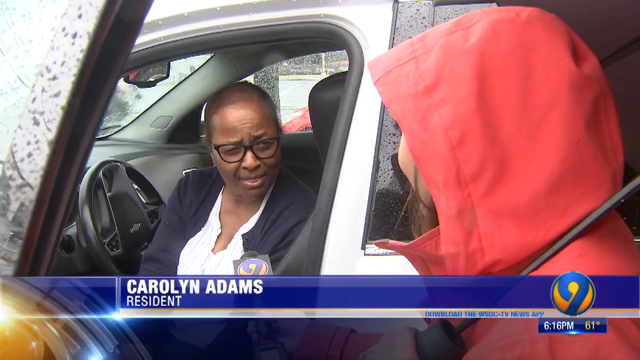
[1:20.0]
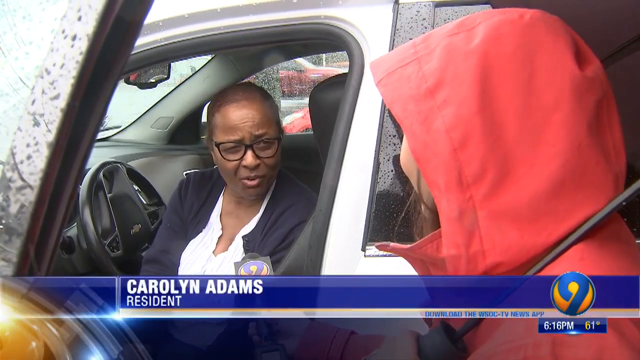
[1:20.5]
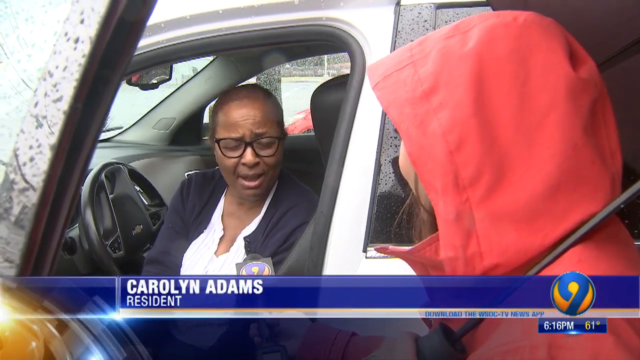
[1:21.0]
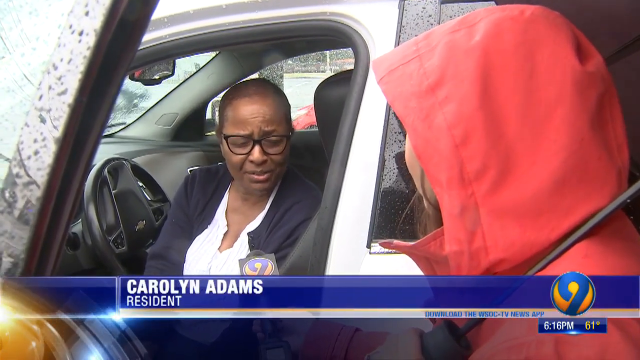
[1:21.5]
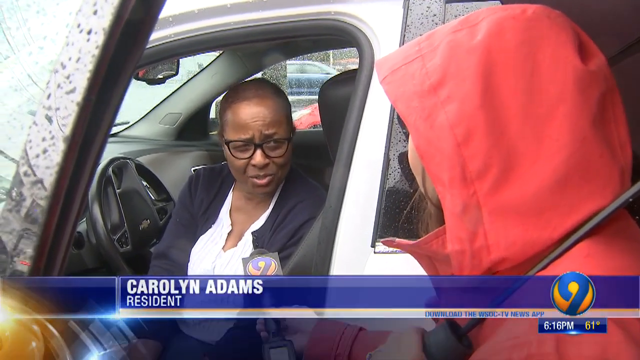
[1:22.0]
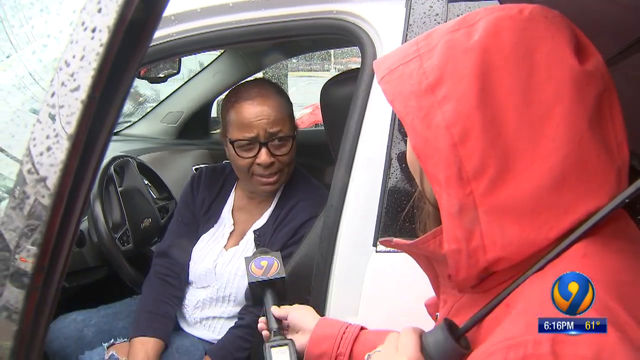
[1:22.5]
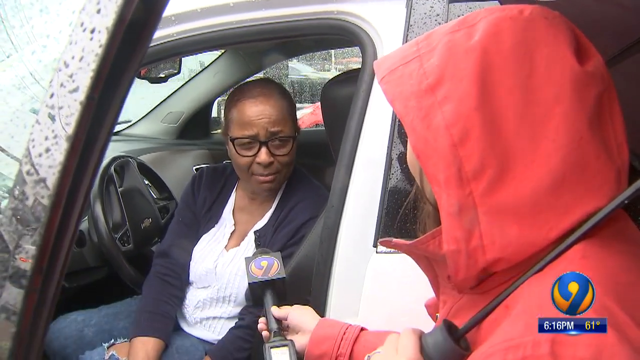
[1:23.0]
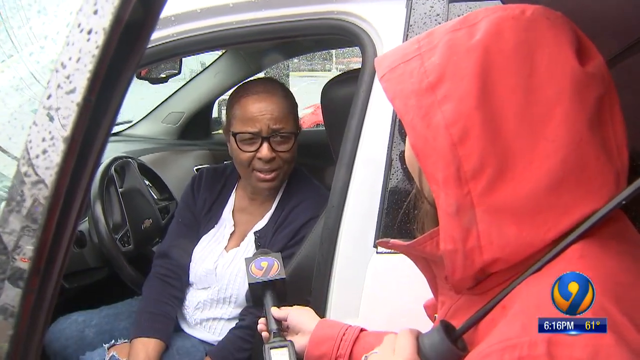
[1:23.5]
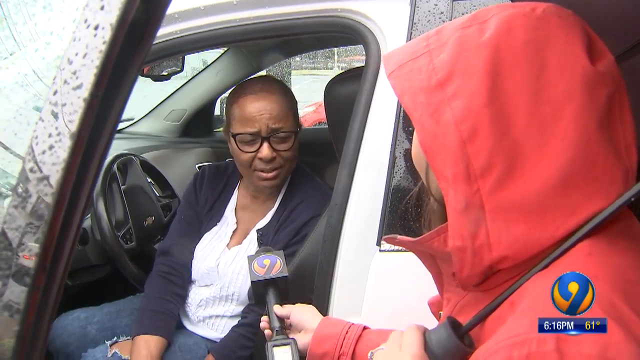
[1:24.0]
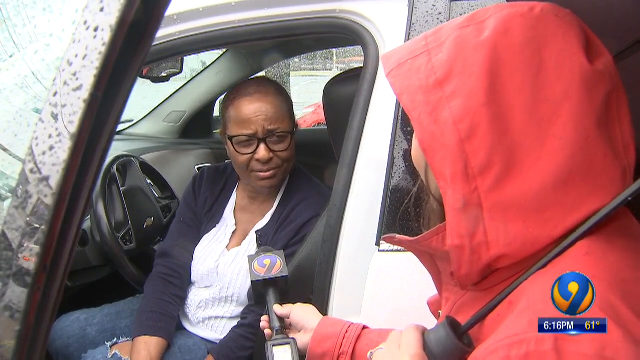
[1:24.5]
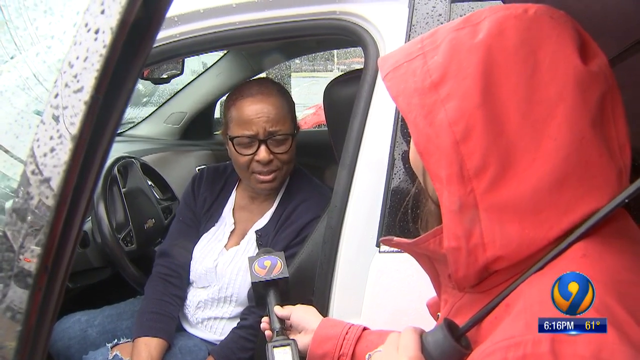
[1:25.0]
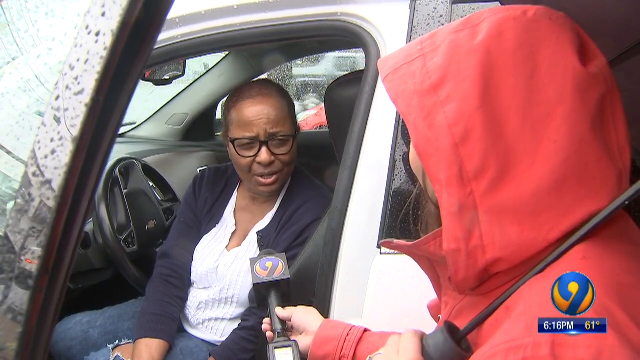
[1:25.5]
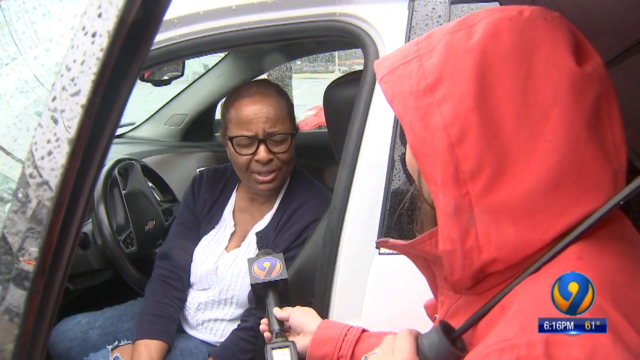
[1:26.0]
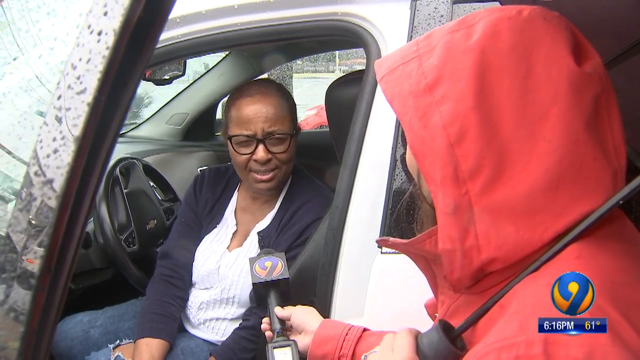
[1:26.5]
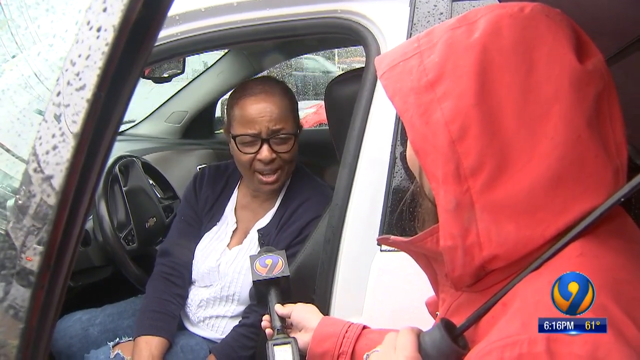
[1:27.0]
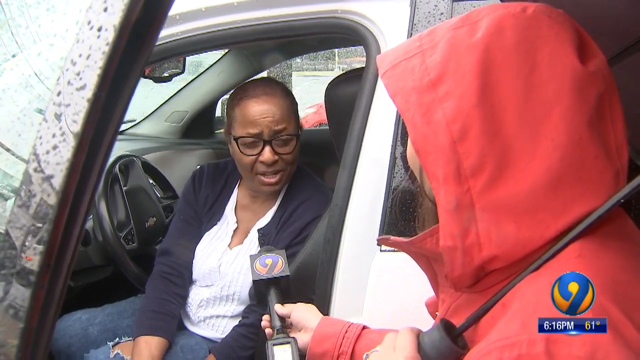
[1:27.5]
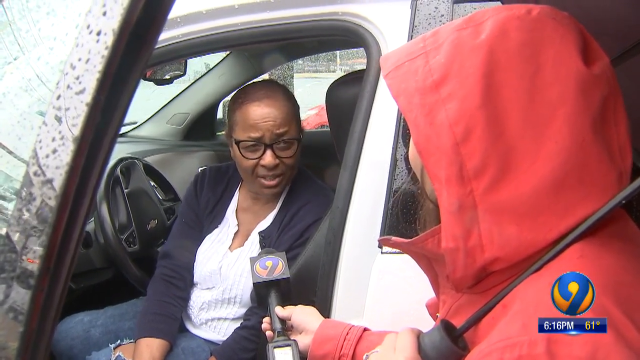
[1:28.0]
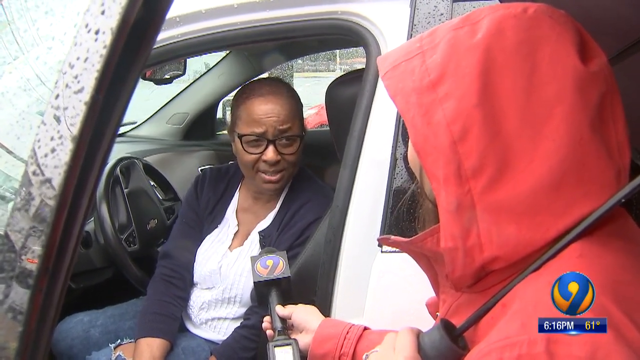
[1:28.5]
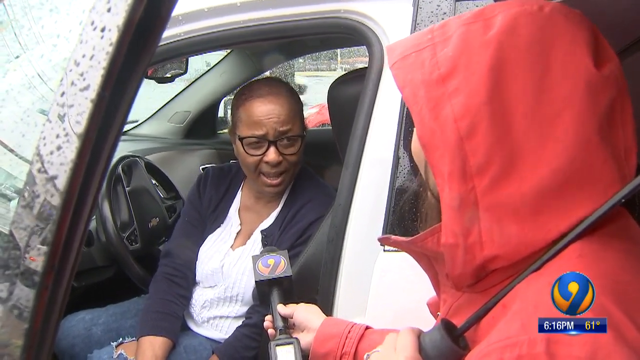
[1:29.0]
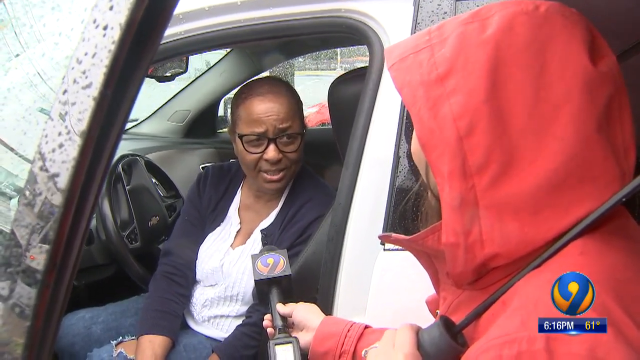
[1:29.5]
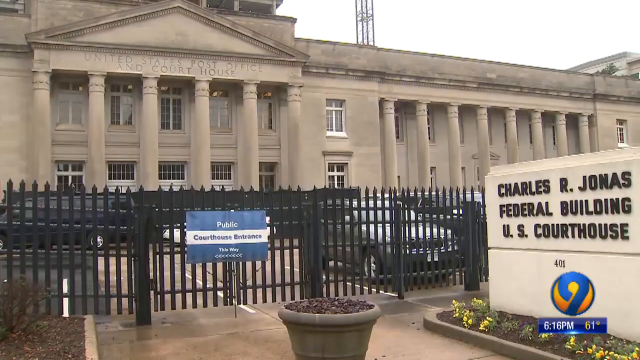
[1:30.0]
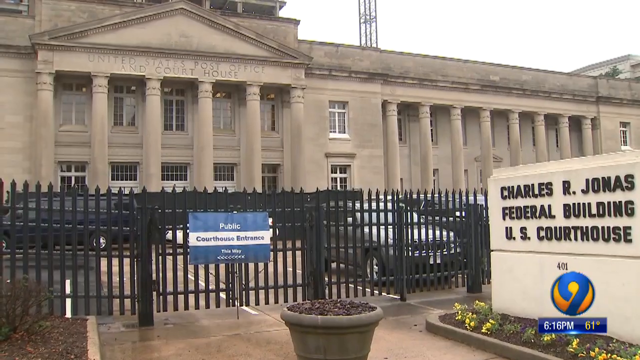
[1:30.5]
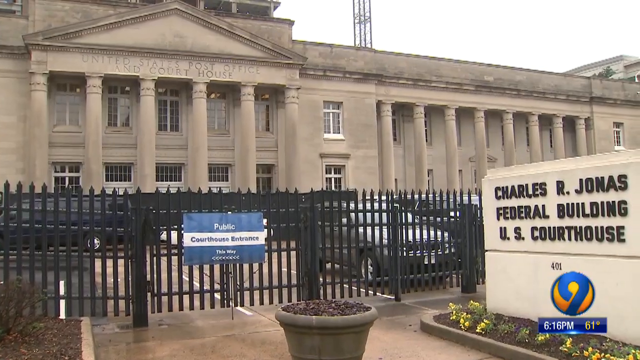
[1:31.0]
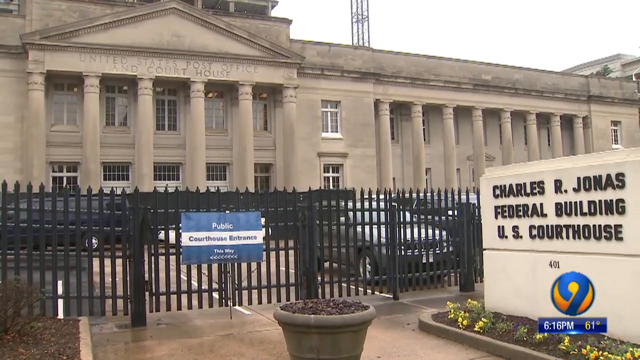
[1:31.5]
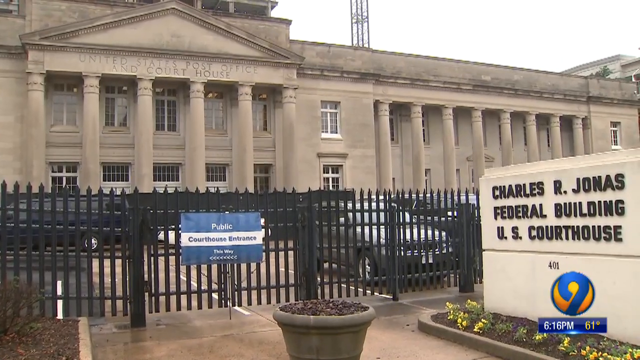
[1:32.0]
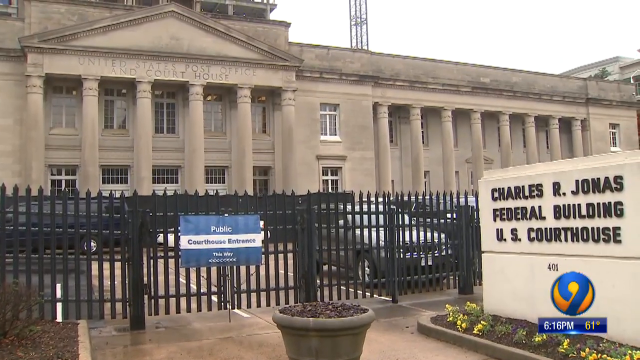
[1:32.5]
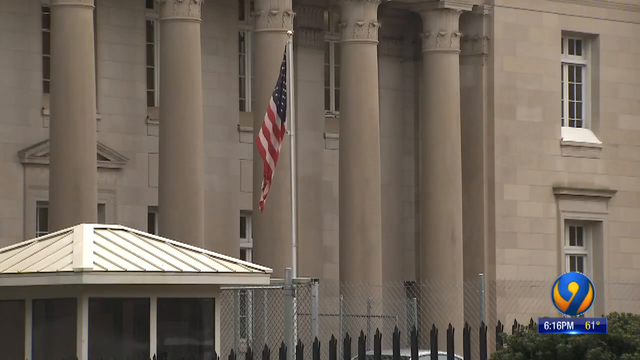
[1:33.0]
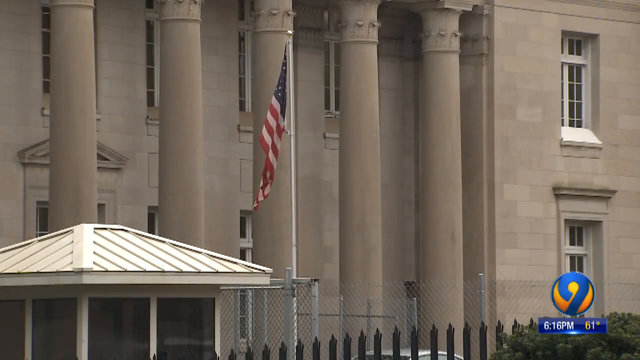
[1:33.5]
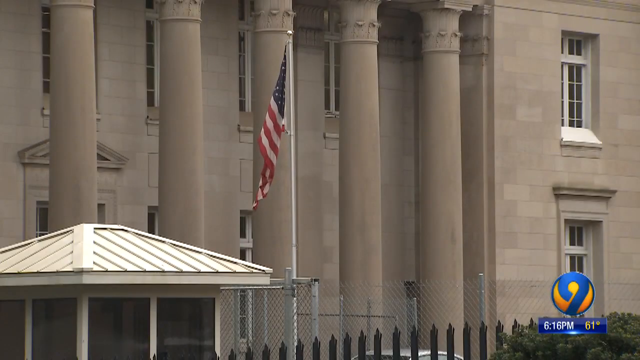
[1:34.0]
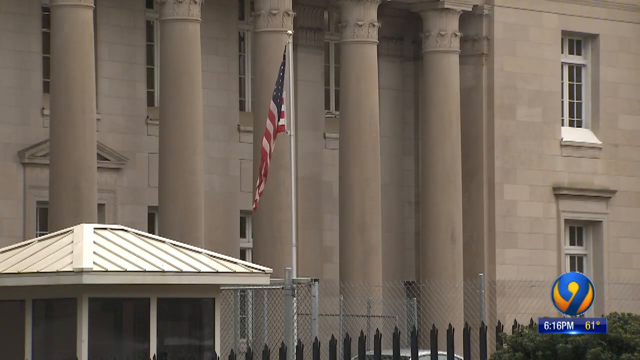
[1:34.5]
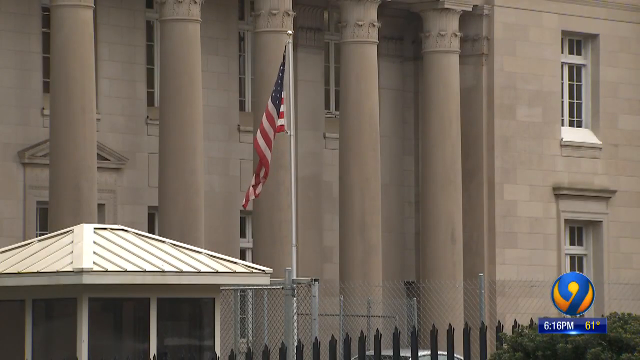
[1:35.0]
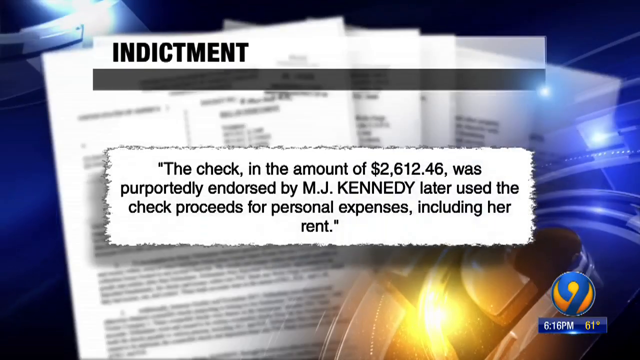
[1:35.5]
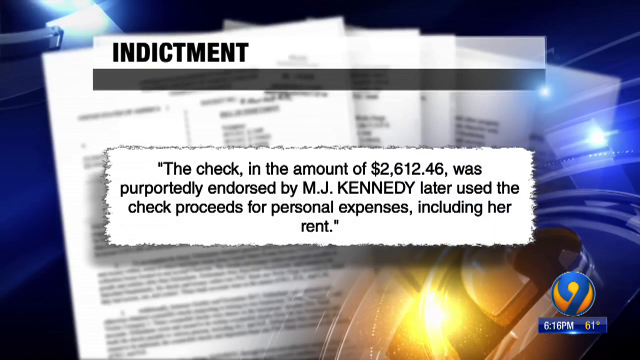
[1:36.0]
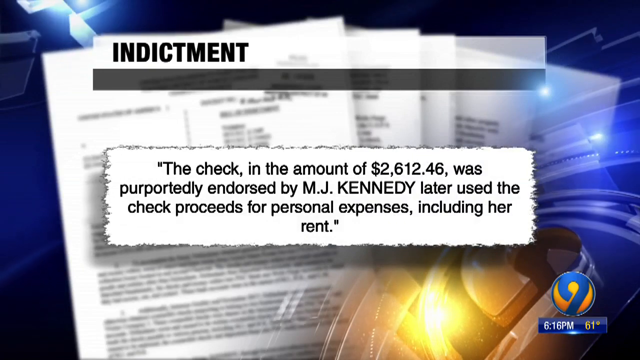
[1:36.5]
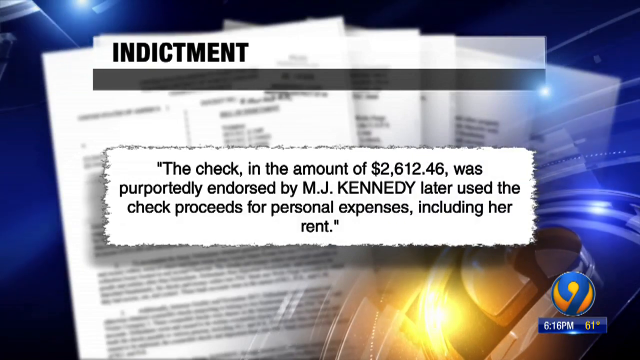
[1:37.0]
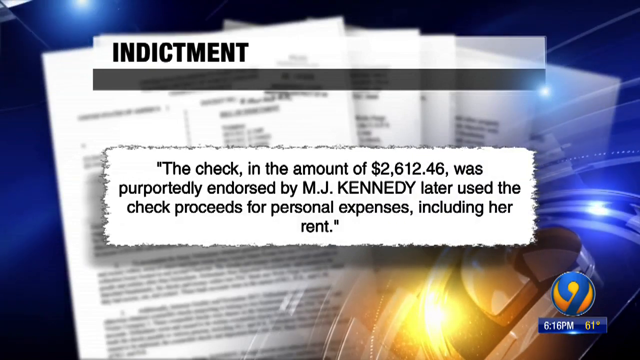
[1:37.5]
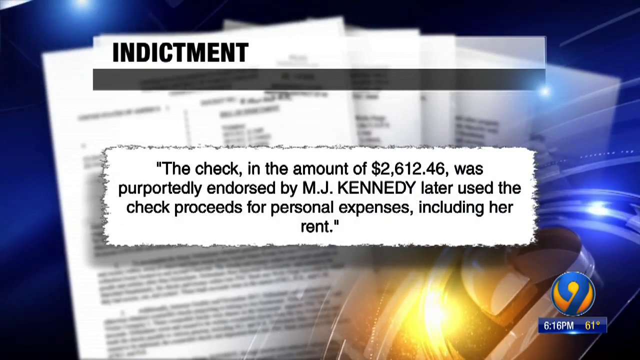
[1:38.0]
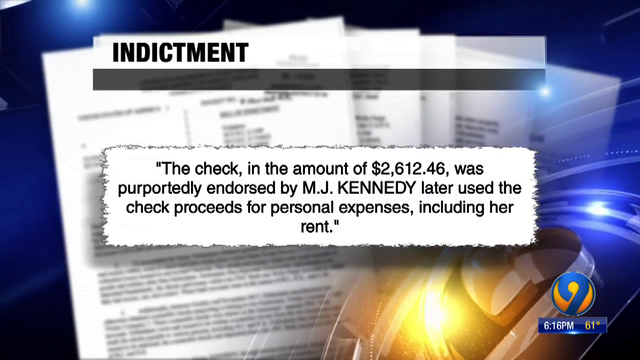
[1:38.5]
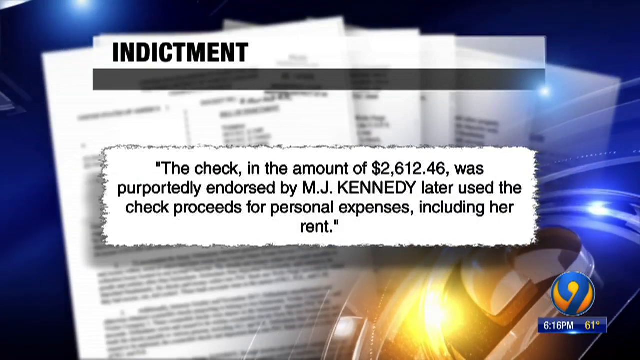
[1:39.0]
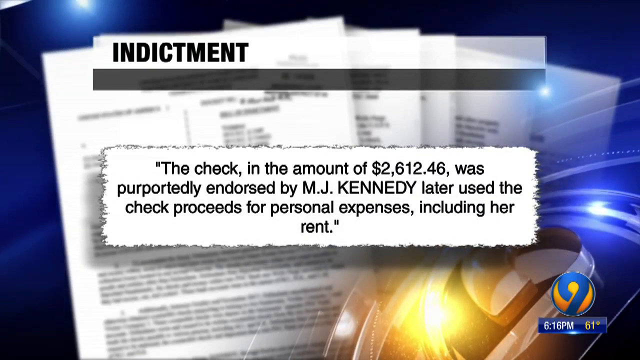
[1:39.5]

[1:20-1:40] Caroline Adams, a resident of the area, talks to a correspondent wearing red while it rains. Carol is seated in a car that seems to be white; she wears glasses and is a Black woman, perhaps between 50 and 70 years old. Behind them there seem to be cars moving around, apparently on a very busy road. The scene changes to the Charles Arajona federal building, the US courthouse, which has black fencing and appears to be an old building, possibly built a very long time ago. There are cars in the vicinity and an American flag can be seen. Next, the word "indictment" appears, and below it: "the check in the amount of $2,612.46 was purportedly endorsed by MJ Kennedy later used the check proceeds for personal expenses including a rent". Behind the text there seem to be some documents in the background.